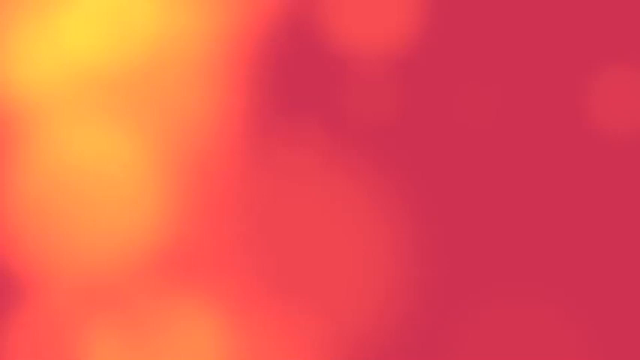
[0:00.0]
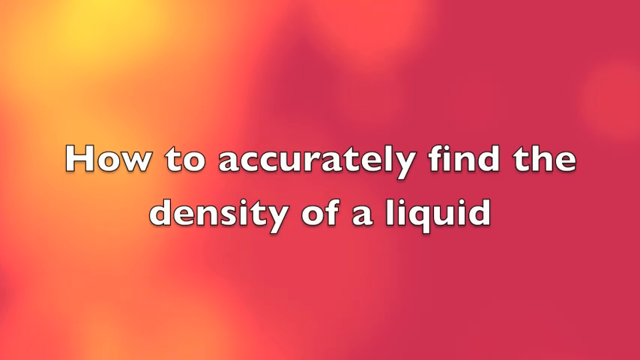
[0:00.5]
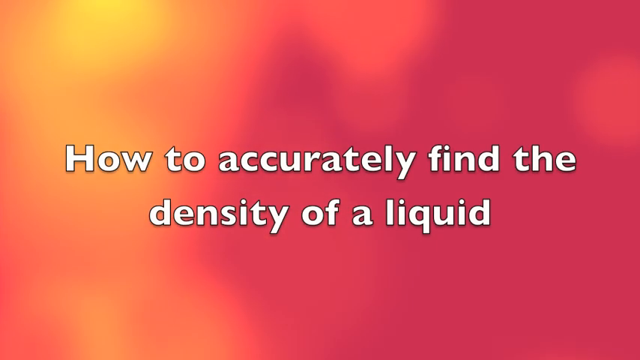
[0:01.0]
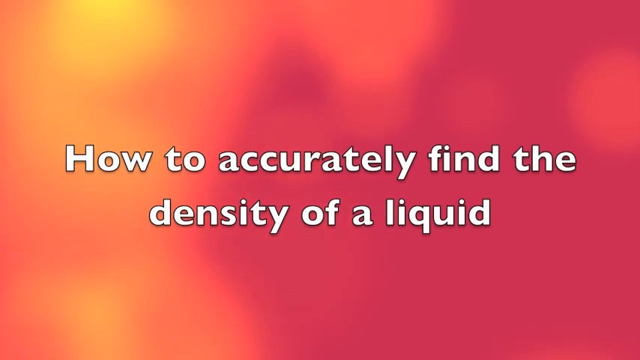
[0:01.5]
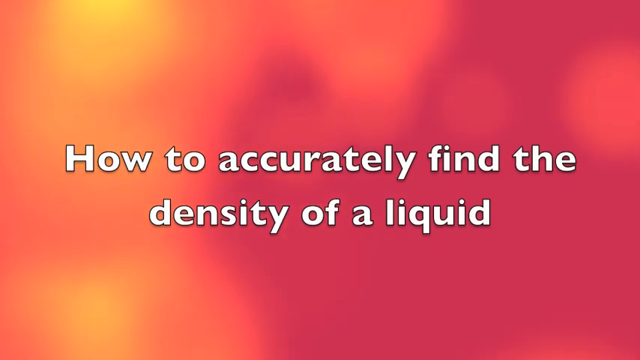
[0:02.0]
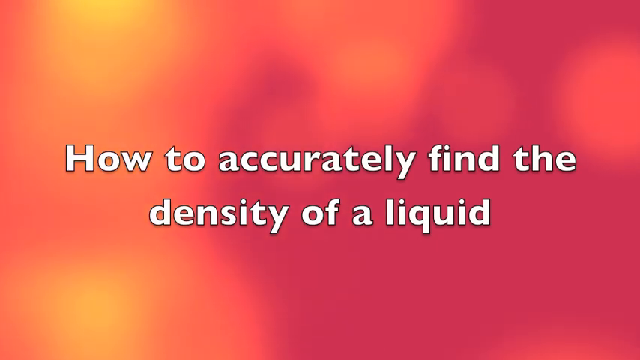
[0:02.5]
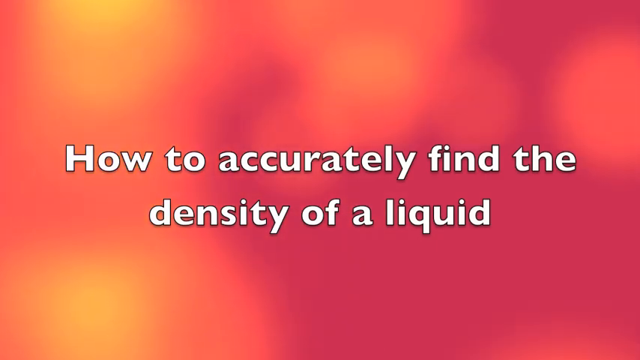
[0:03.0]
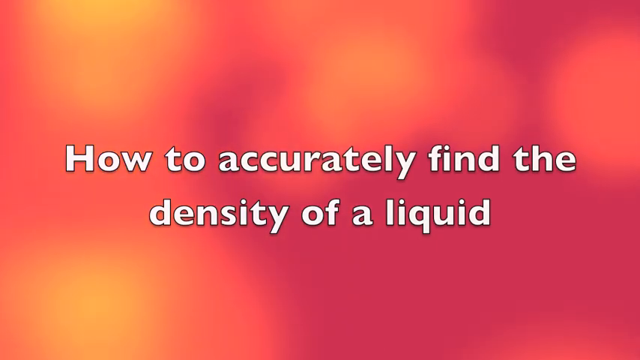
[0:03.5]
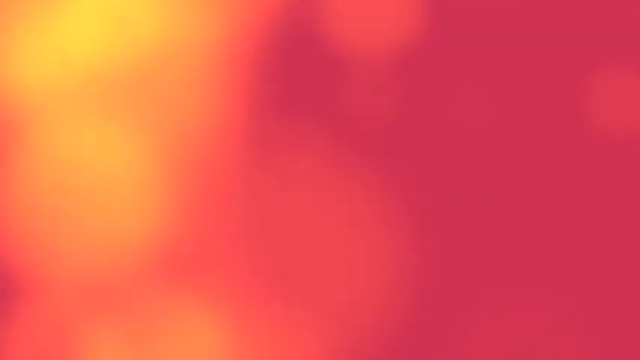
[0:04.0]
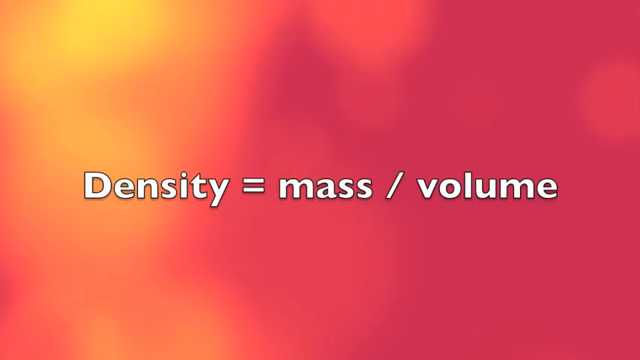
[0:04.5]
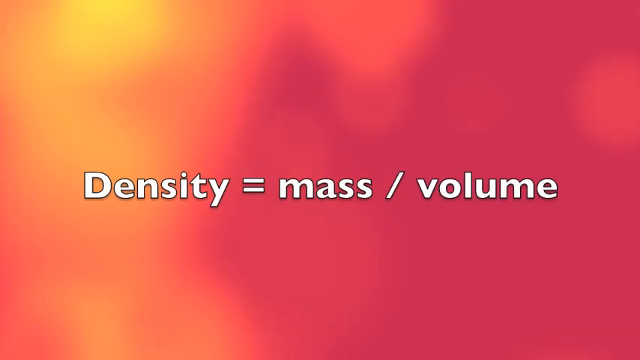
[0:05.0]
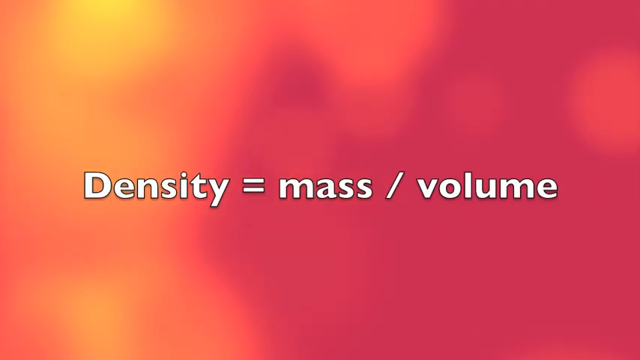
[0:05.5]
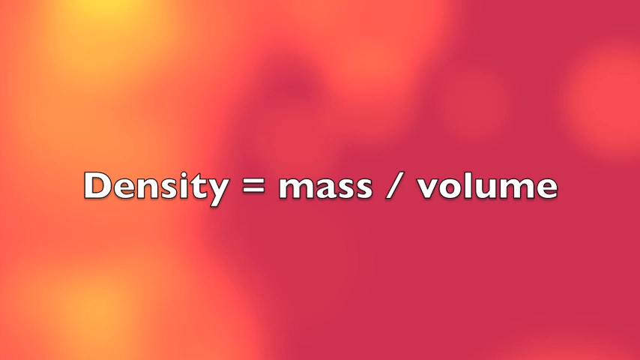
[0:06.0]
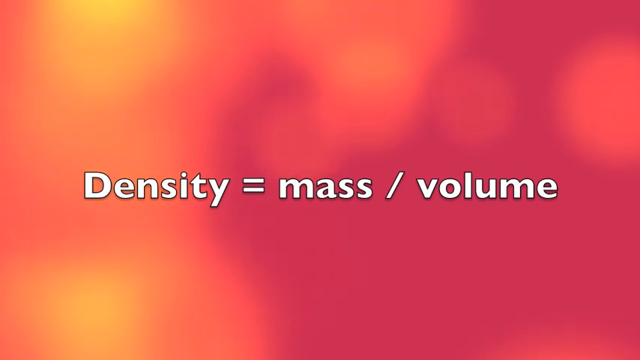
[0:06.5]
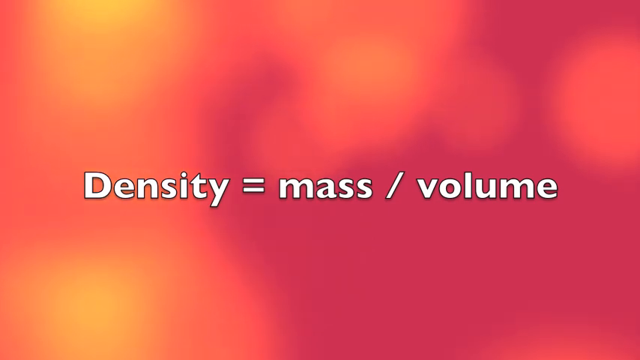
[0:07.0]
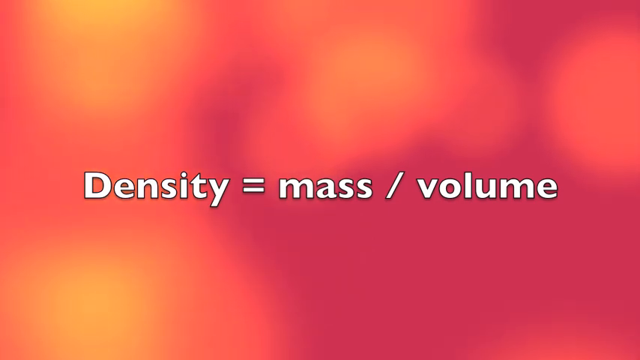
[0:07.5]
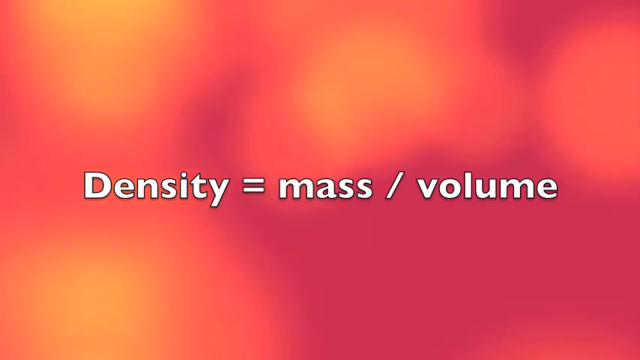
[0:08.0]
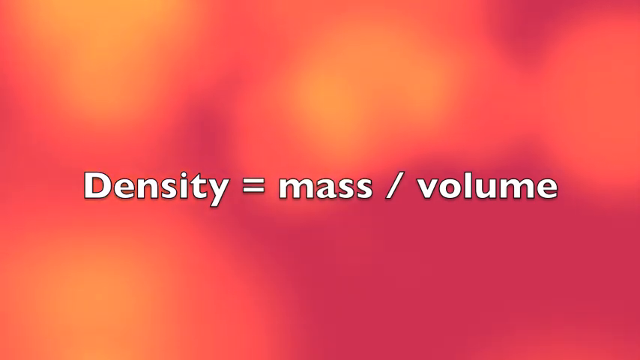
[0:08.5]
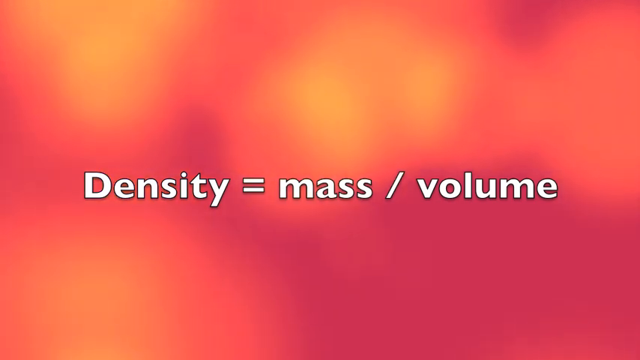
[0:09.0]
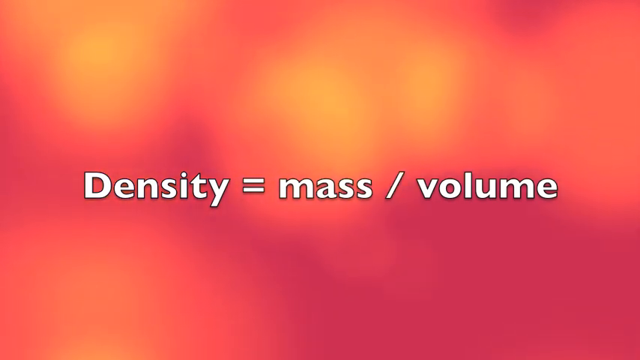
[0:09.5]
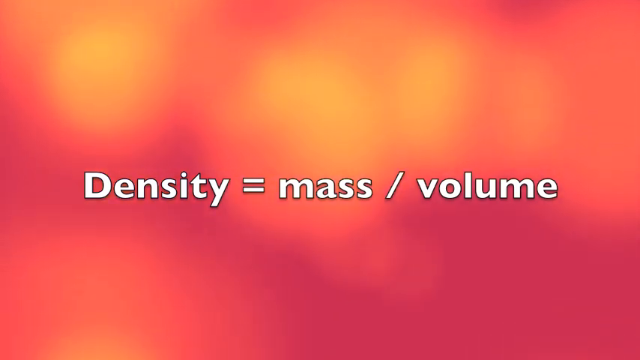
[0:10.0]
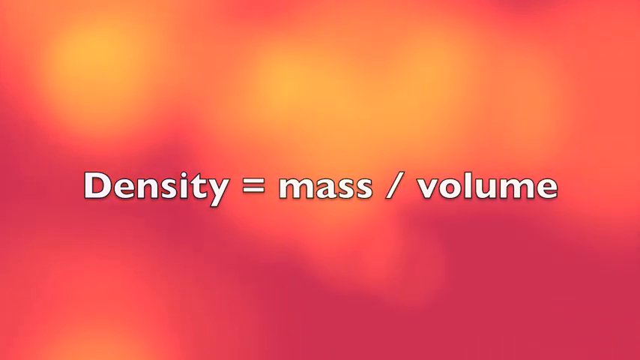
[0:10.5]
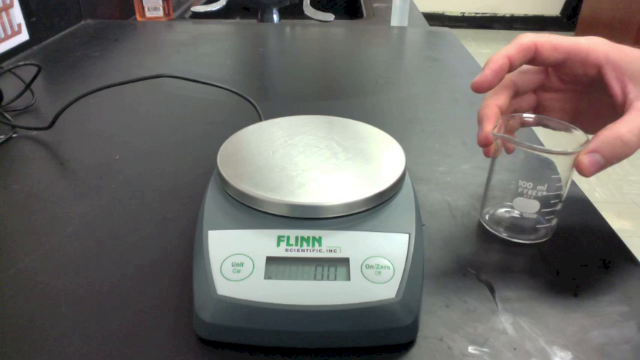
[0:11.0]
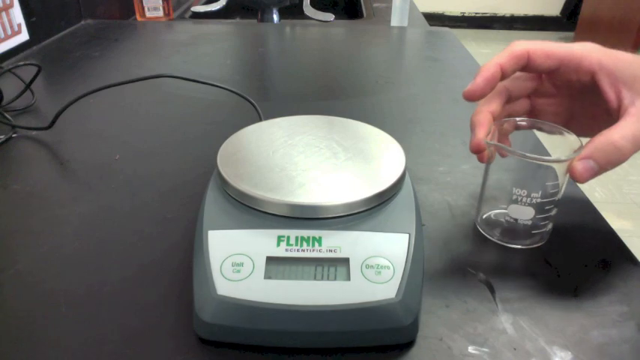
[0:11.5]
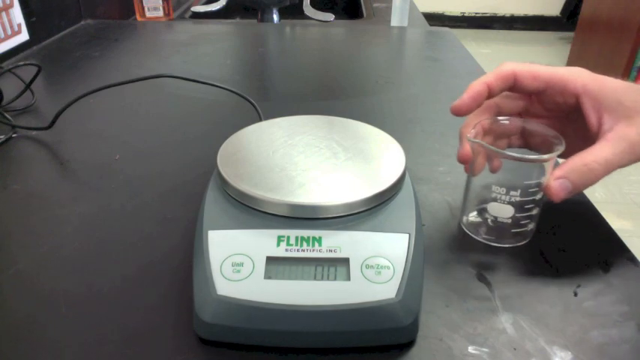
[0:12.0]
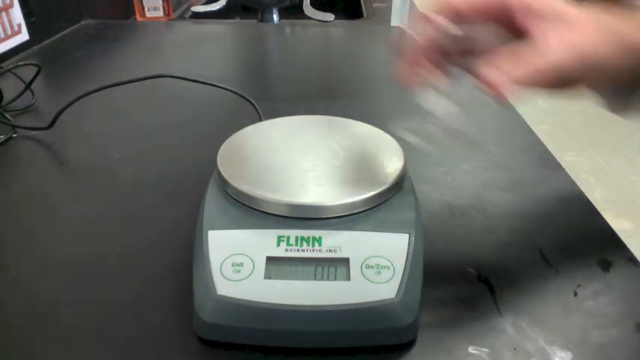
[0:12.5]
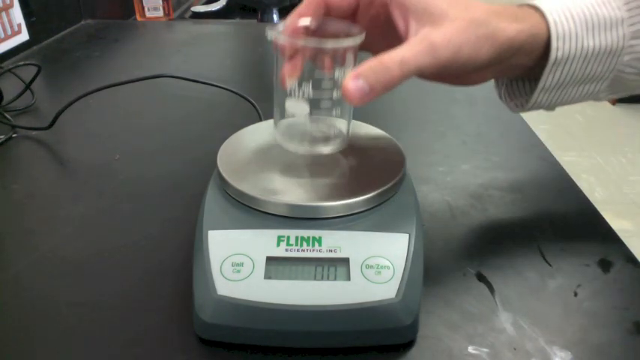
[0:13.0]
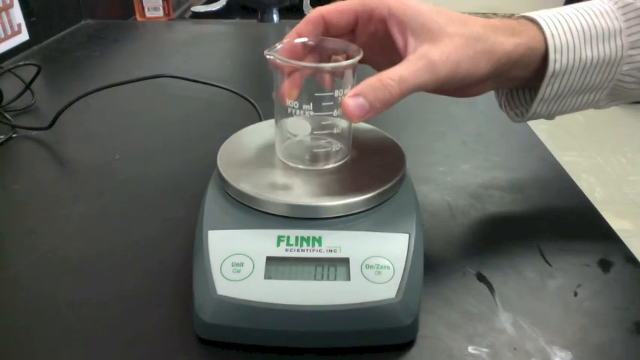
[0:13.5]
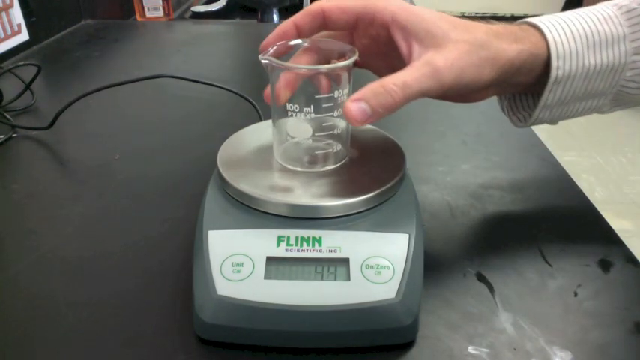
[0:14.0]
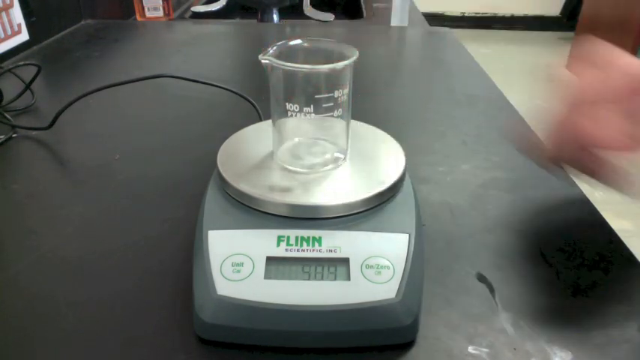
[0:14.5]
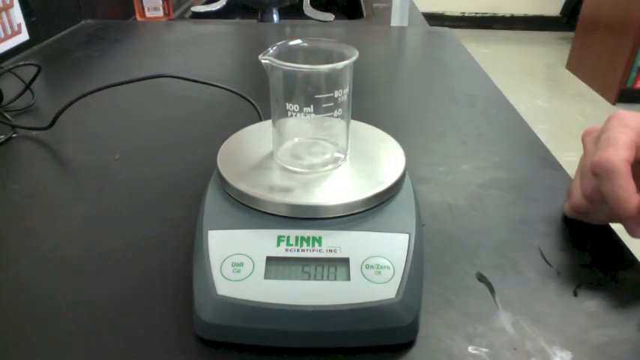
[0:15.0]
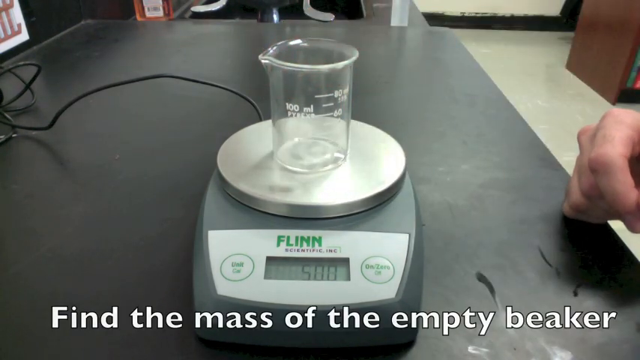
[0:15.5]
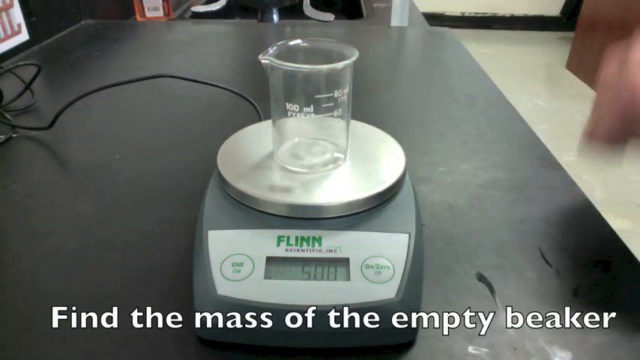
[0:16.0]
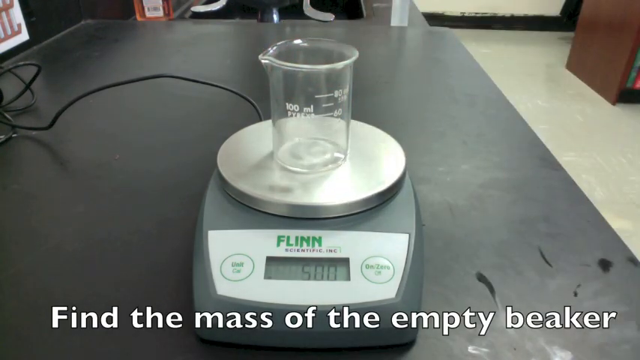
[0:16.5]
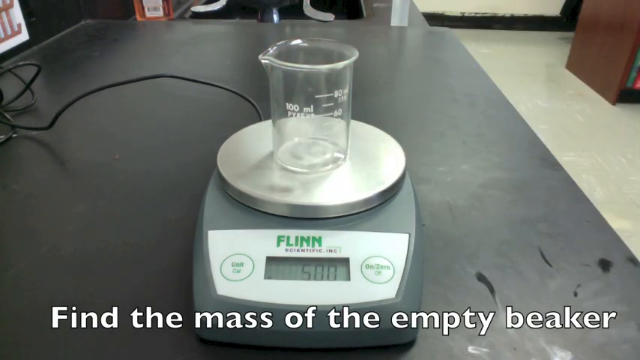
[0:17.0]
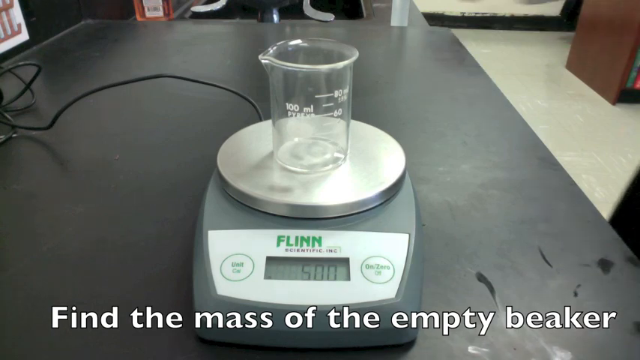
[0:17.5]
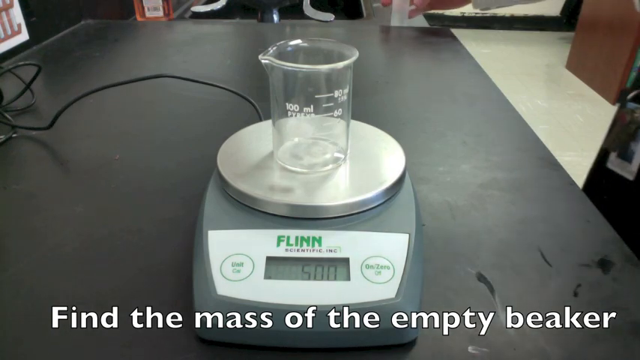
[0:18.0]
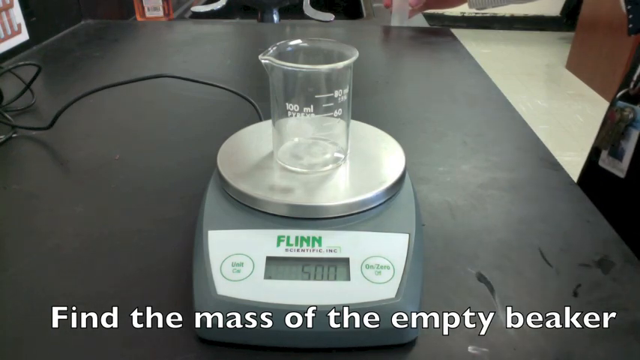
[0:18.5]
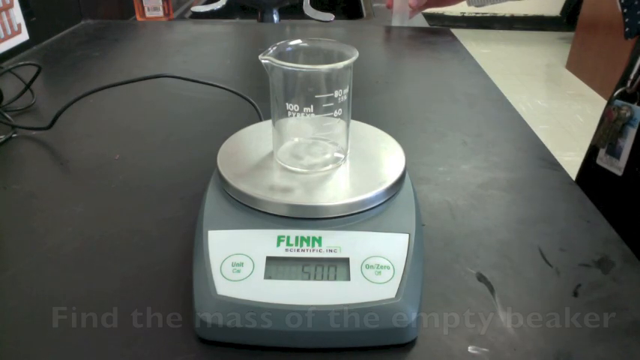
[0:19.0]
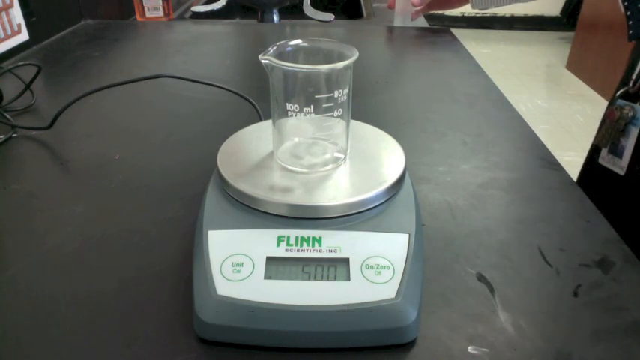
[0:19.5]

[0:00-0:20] The video opens on a pink and yellow screen with text about accurately finding the density of a liquid, and the text "density equals mass over volume". A person's right hand comes in from the right side of the screen. A scale is on the screen, with a black board coming out of the back of it toward the left side of the screen; the scale is on a black table. The person sets a beaker on the scale, and the scale's screen reads 5.55. At the bottom, text reads "find the mass of an empty beaker", so the beaker is apparently empty with no water in it. When the hand reaches in, it picks up something from behind the table that looks like another beaker. The person is wearing a lab coat, and their face is not visible.